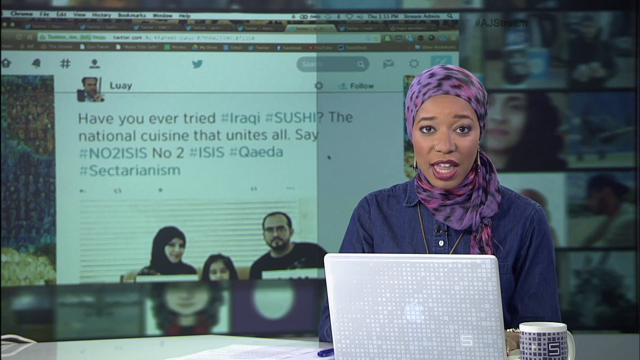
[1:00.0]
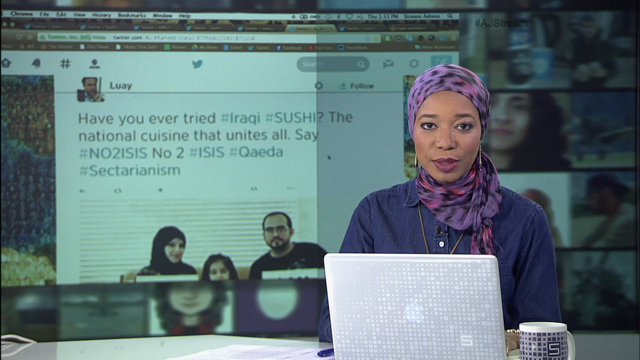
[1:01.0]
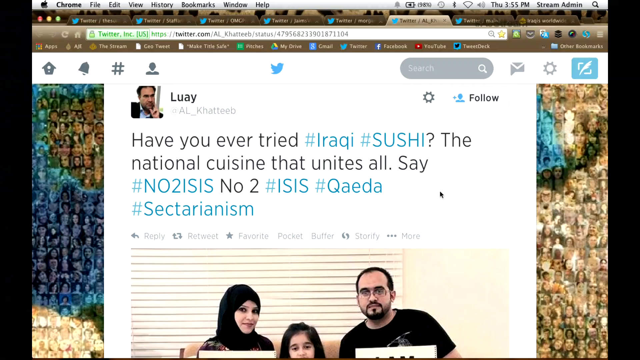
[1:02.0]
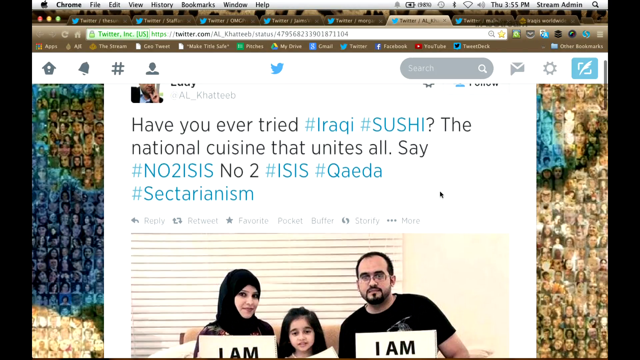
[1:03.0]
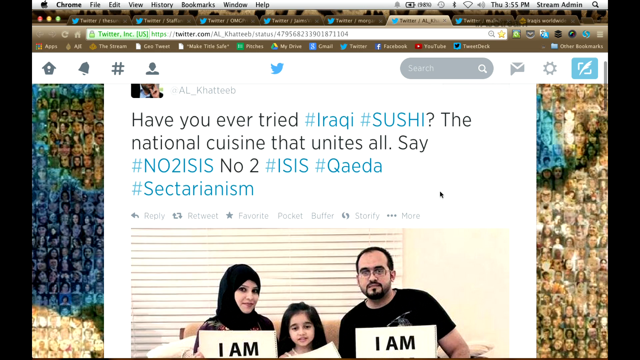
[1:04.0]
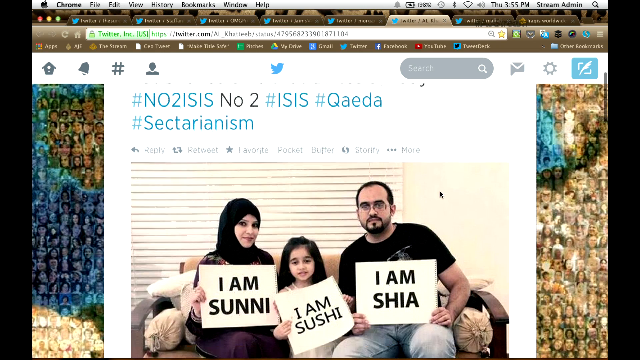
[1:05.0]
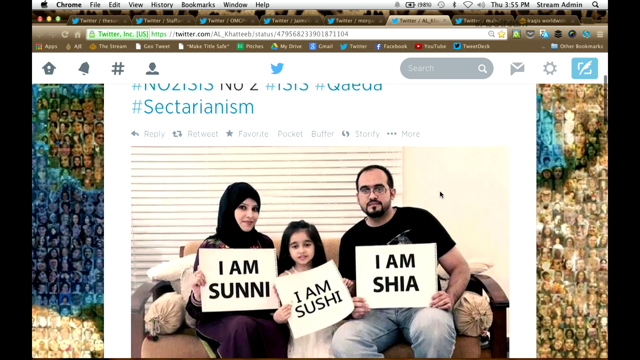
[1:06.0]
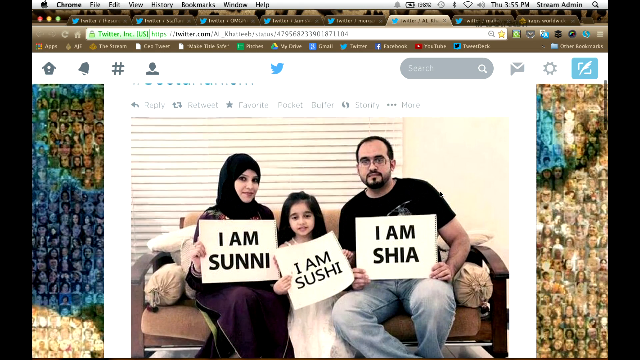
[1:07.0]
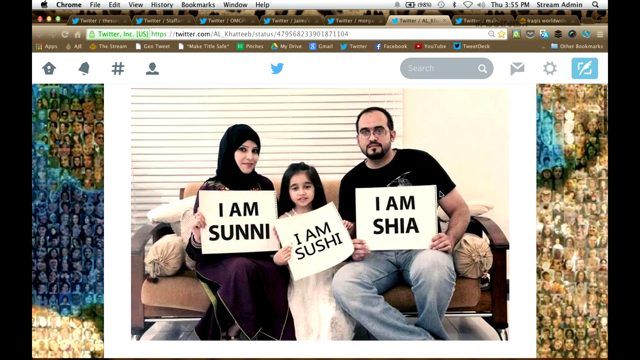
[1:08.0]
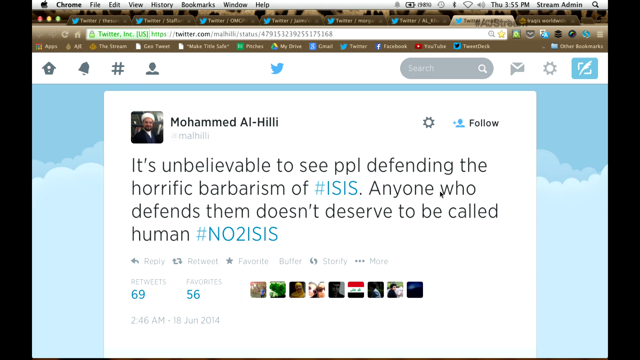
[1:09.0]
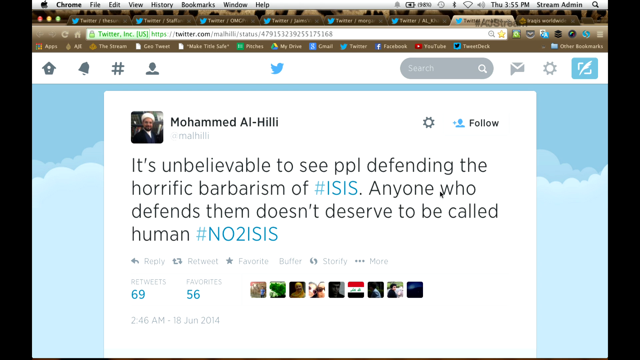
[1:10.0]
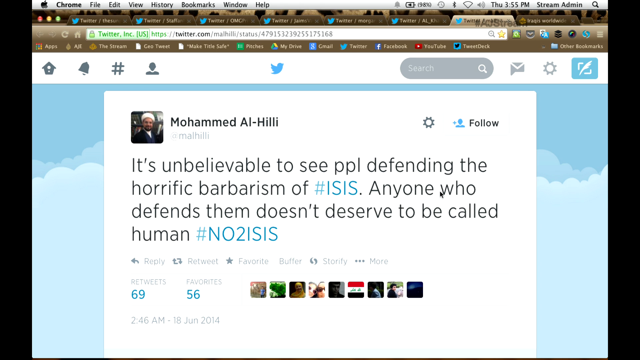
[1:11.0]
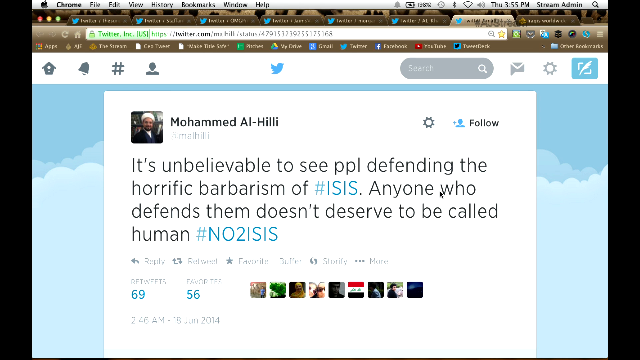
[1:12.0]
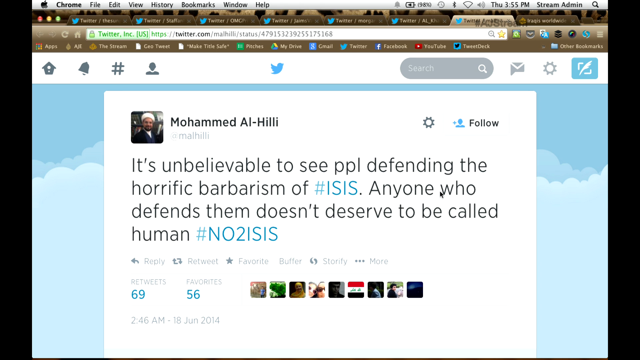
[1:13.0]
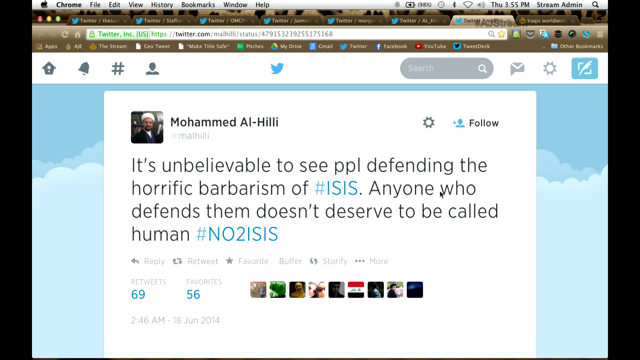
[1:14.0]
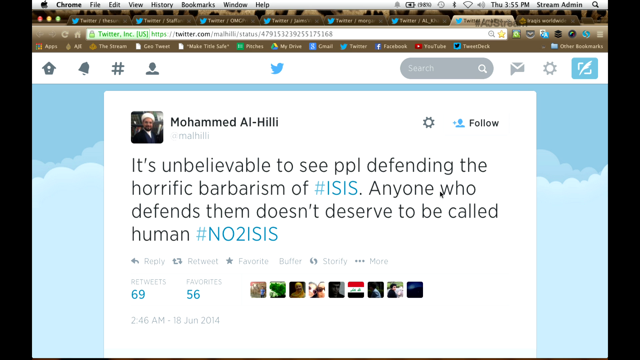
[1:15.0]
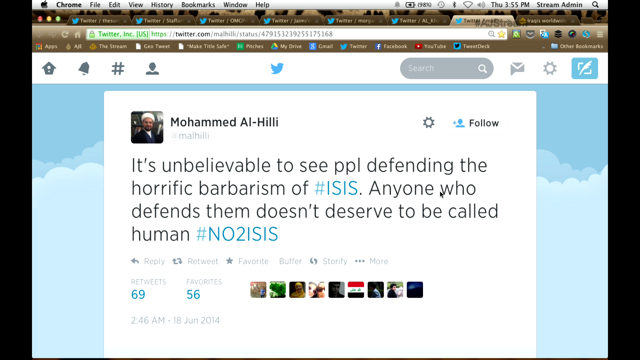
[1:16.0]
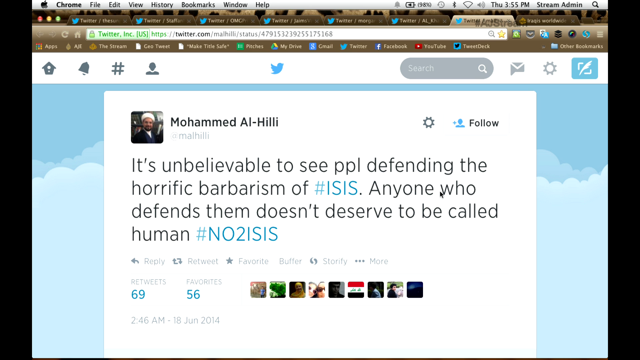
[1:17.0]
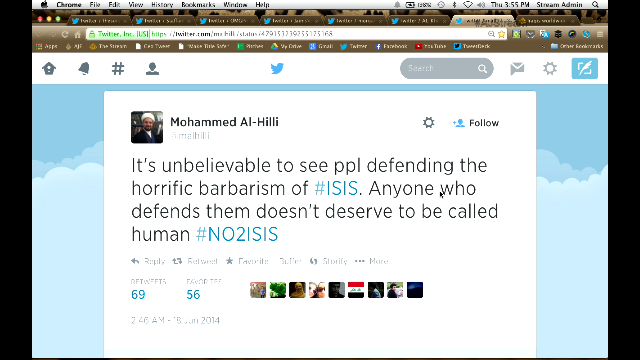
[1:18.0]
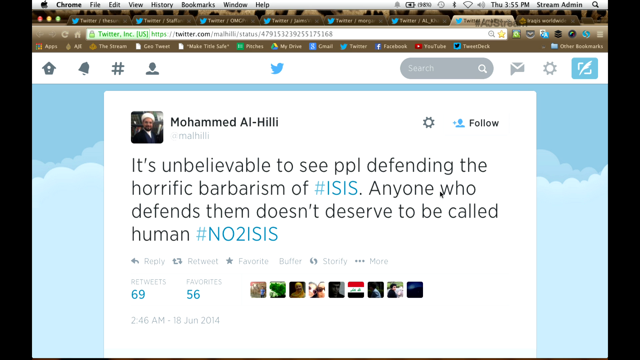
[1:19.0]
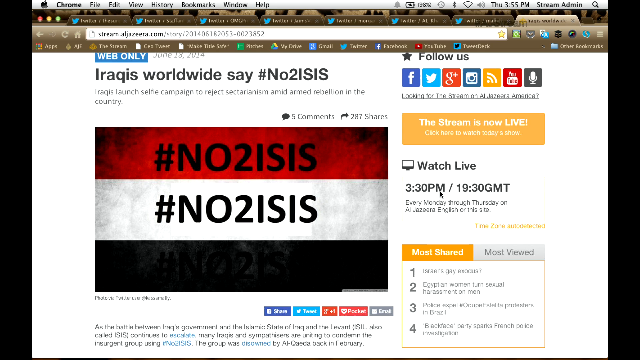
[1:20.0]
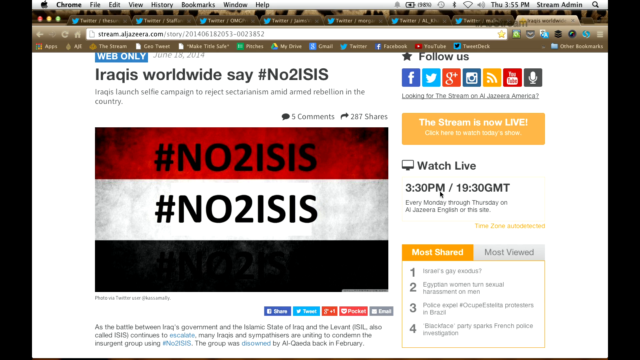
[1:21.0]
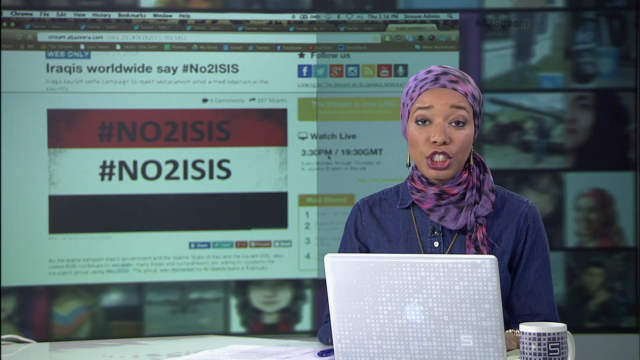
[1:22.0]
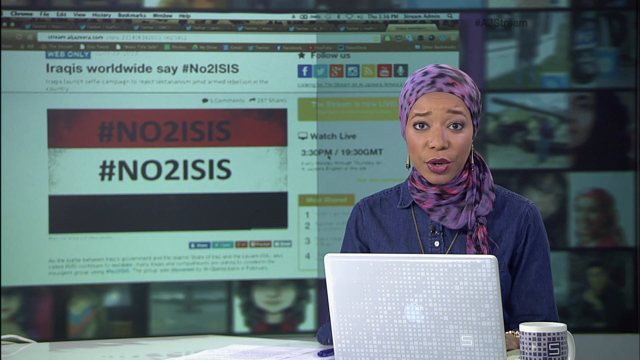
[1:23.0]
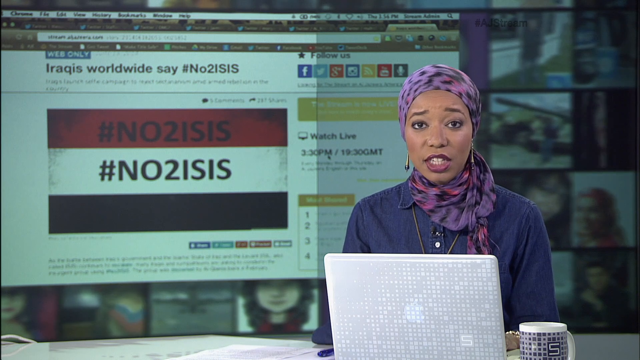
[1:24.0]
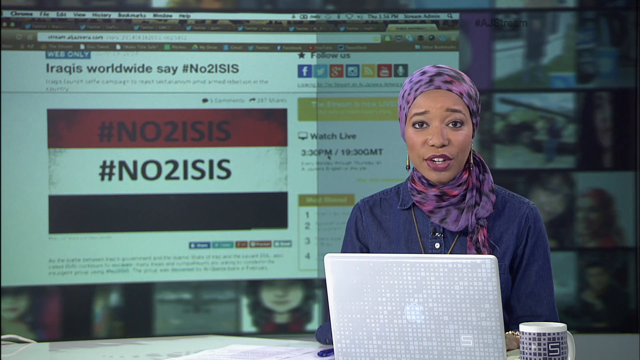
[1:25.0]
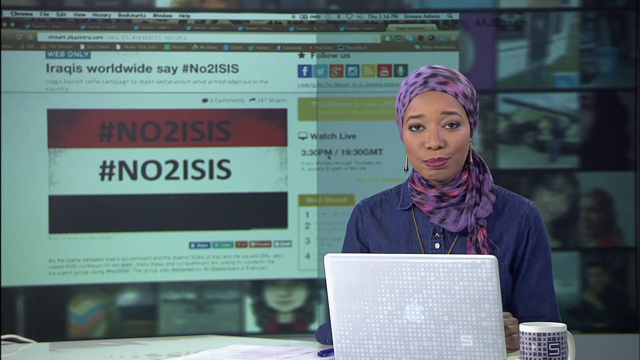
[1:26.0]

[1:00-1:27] A news reporter is on the right side of the screen in a long-sleeve denim button-up, with a purple and black dot scarf around her head and around her neck. Her laptop is open in front of her and has a pixelated image on the cover. In the background of the main image are multiple web pages, somewhat grayed out. As the woman talks, the shot moves through one page and then another, different Twitter pages. One says "have you ever tried # iraqi # sushi the national cuisine that unites all" followed by more hashtags including "# isis". Then an image shows a man, a little girl and a woman with a head wrap in front of the crime scene. Another post from Muhammad Ali pops up, saying "it's unbelievable to see people defending the horrific barbarism of isis" and ending with "no to isis". These hashtags seem to repeat the exact no to ISIS hashtag seen in other places.